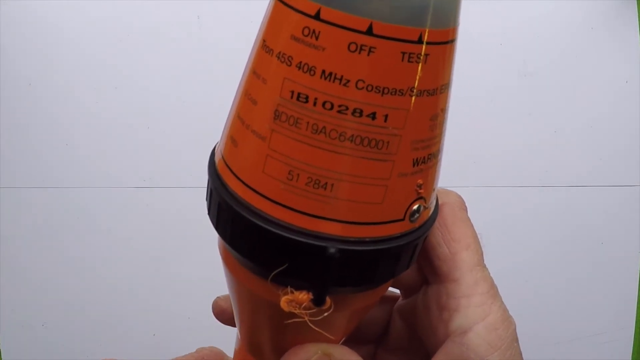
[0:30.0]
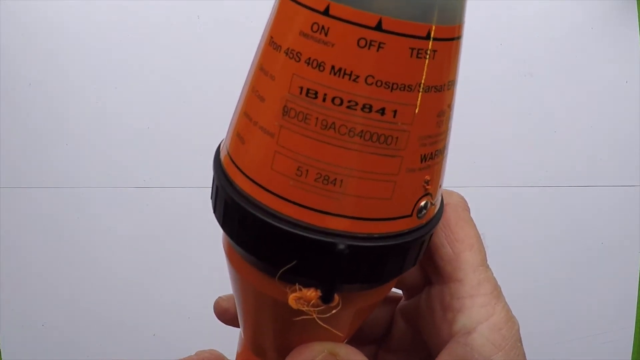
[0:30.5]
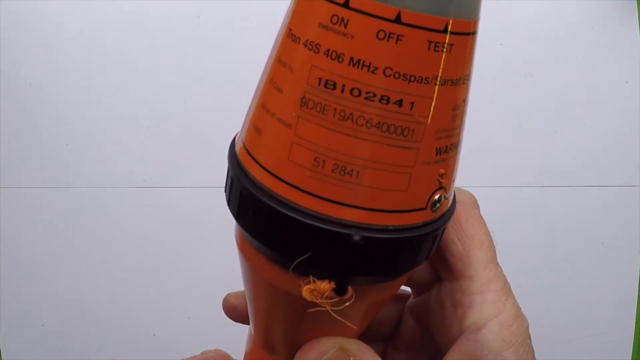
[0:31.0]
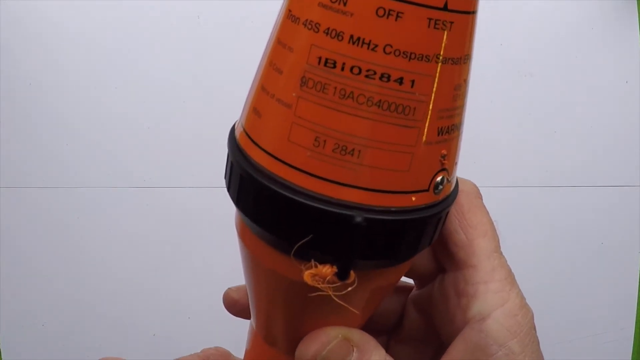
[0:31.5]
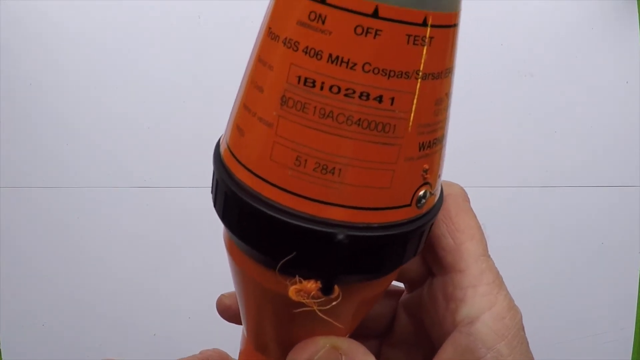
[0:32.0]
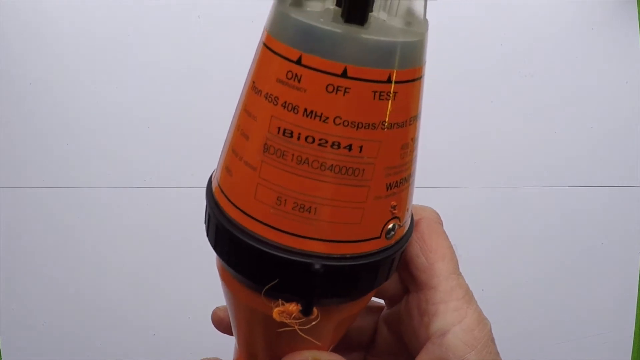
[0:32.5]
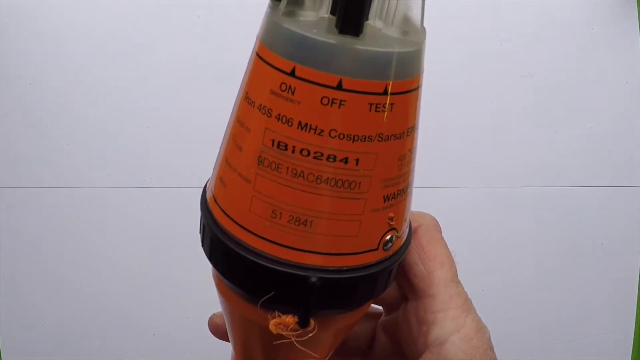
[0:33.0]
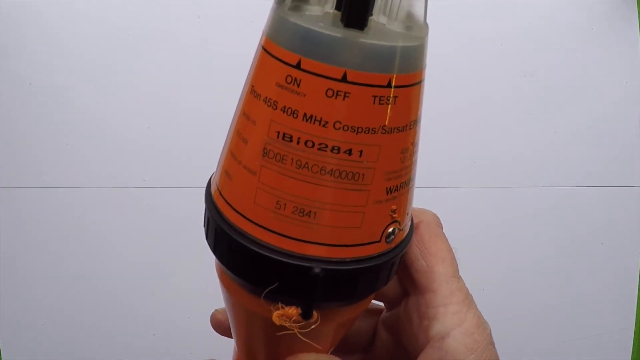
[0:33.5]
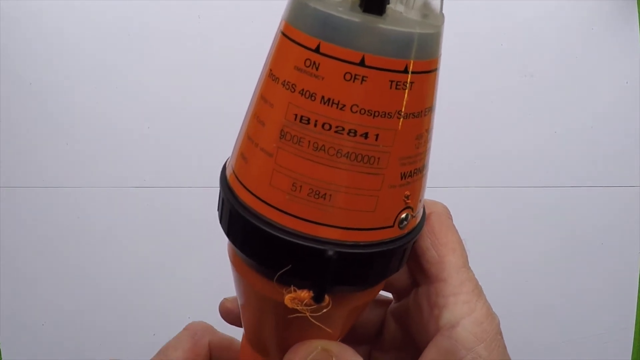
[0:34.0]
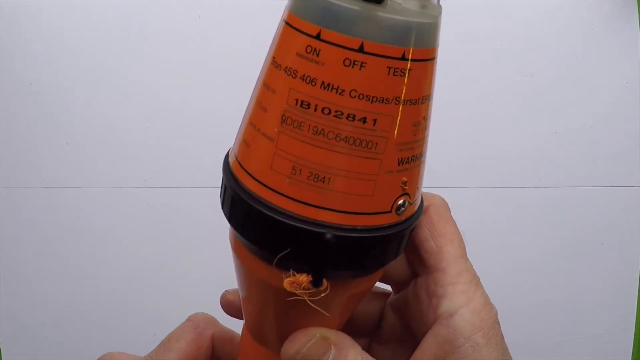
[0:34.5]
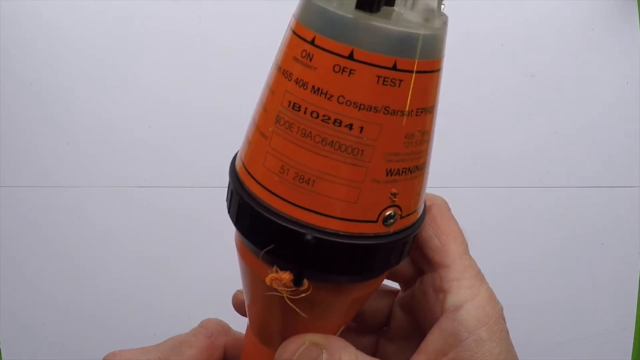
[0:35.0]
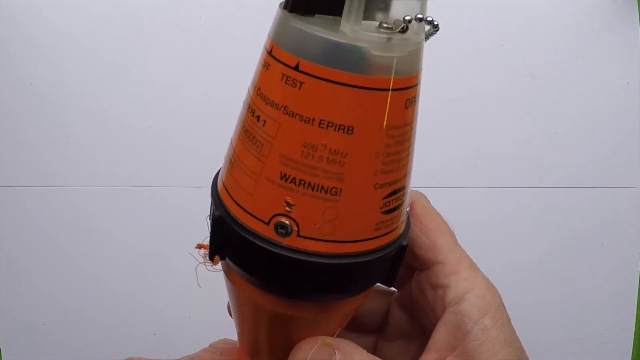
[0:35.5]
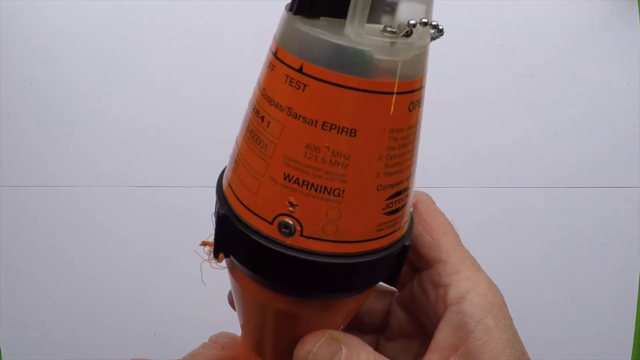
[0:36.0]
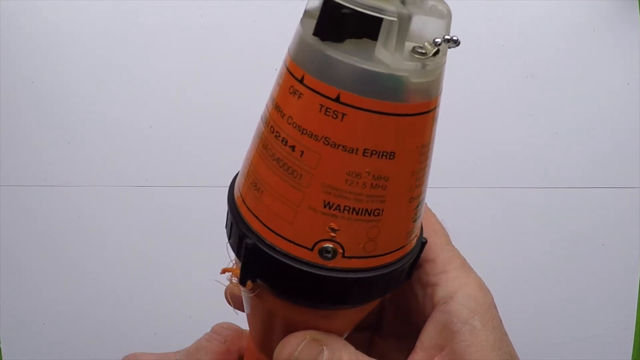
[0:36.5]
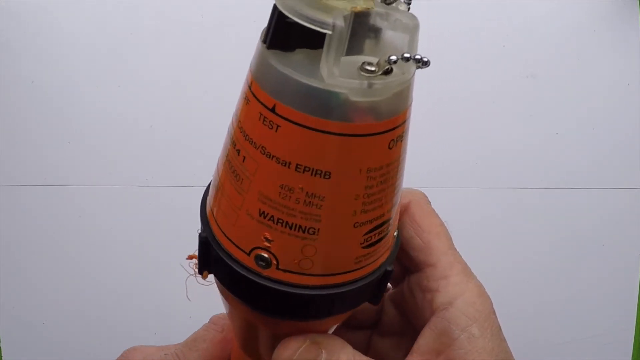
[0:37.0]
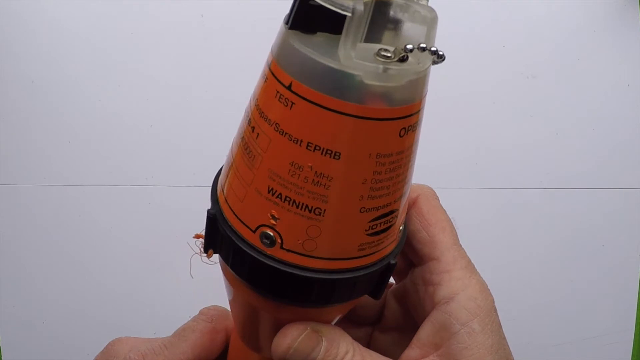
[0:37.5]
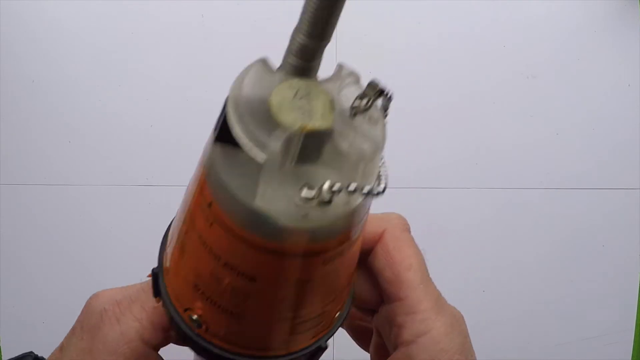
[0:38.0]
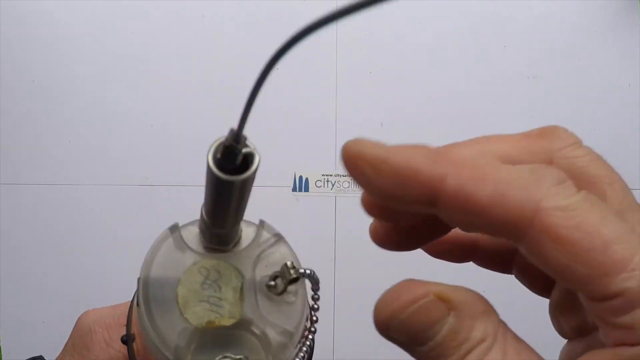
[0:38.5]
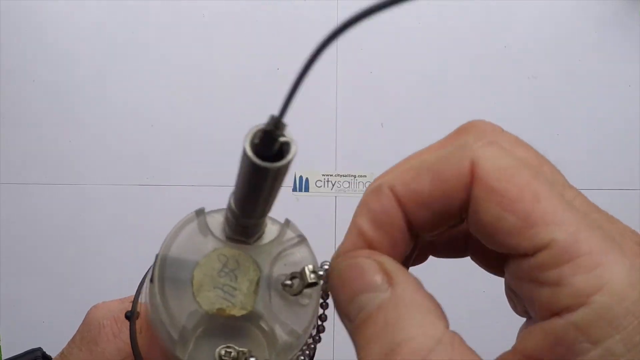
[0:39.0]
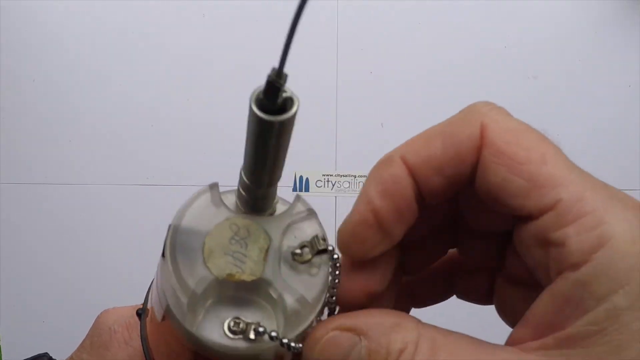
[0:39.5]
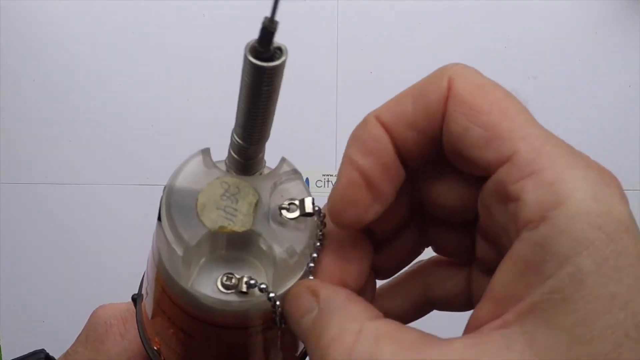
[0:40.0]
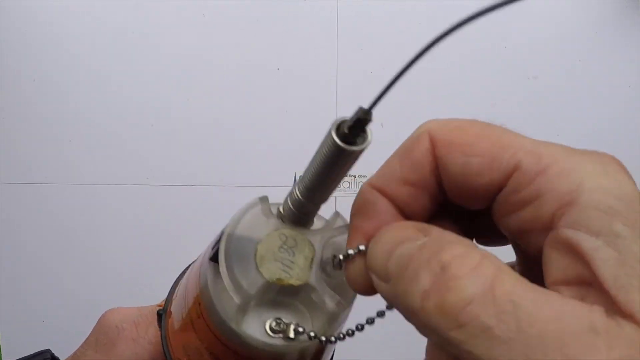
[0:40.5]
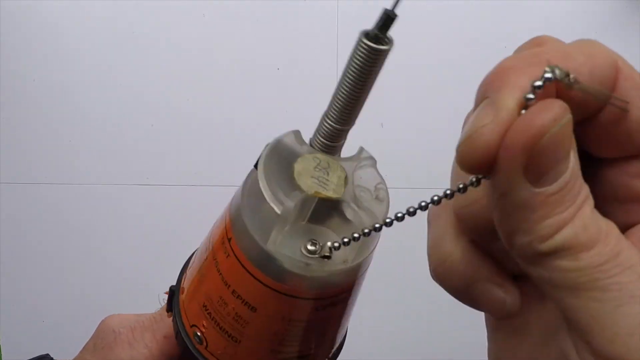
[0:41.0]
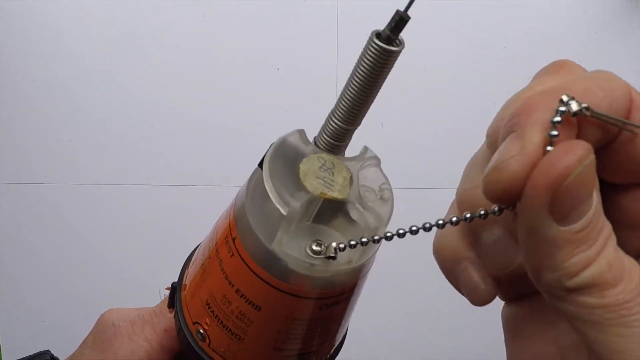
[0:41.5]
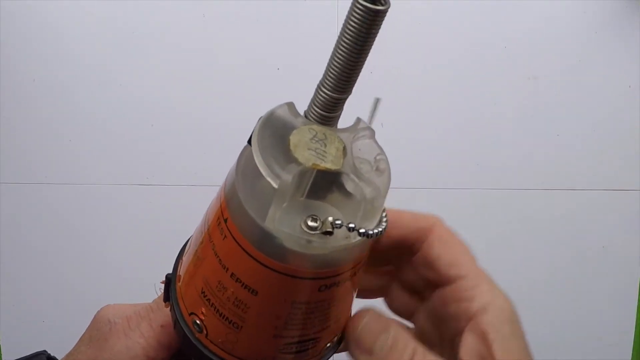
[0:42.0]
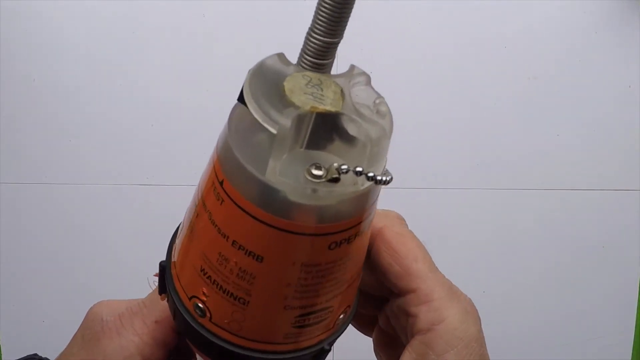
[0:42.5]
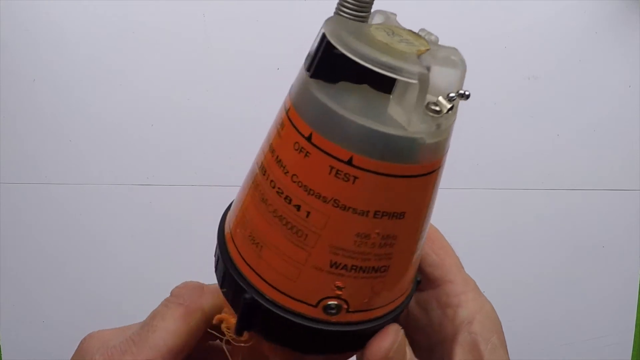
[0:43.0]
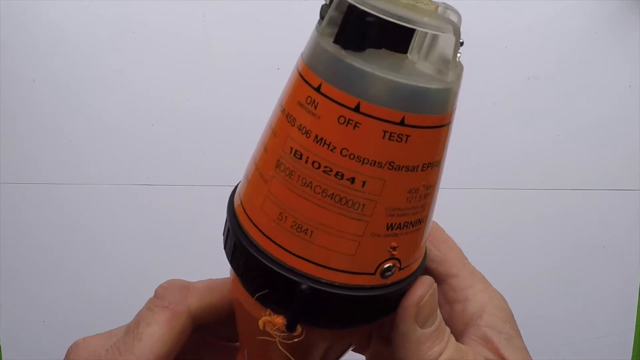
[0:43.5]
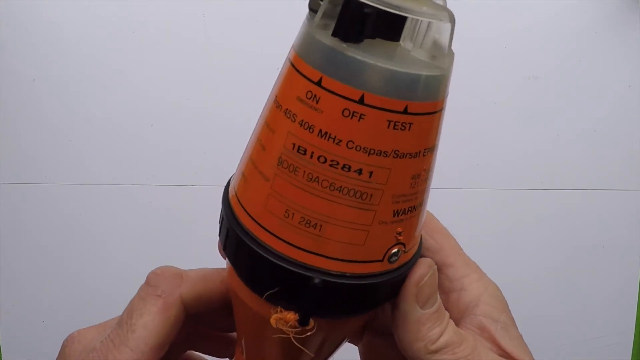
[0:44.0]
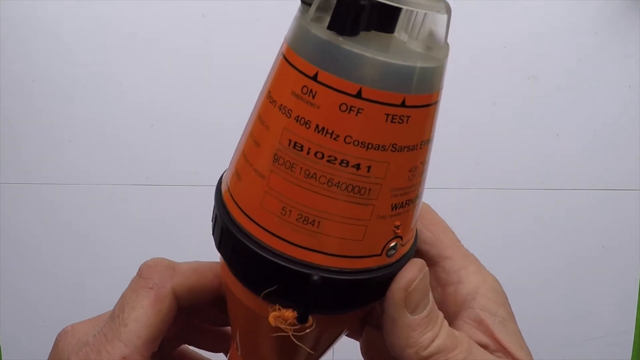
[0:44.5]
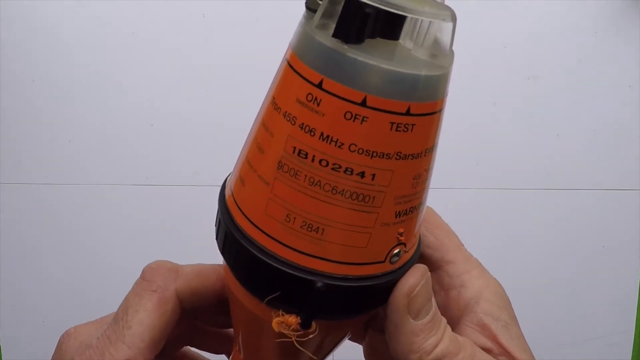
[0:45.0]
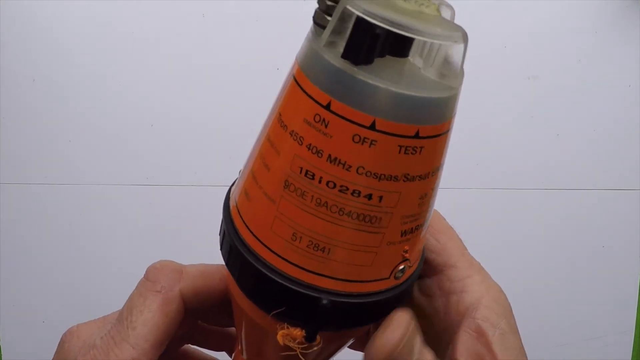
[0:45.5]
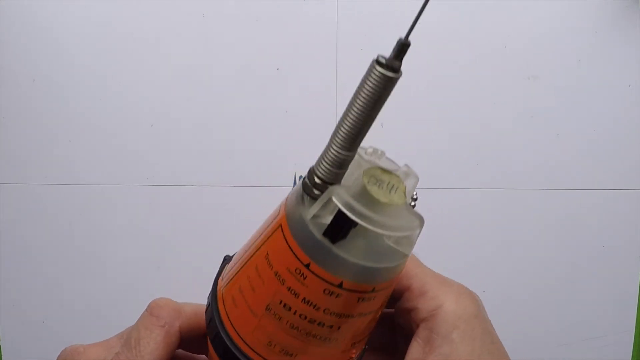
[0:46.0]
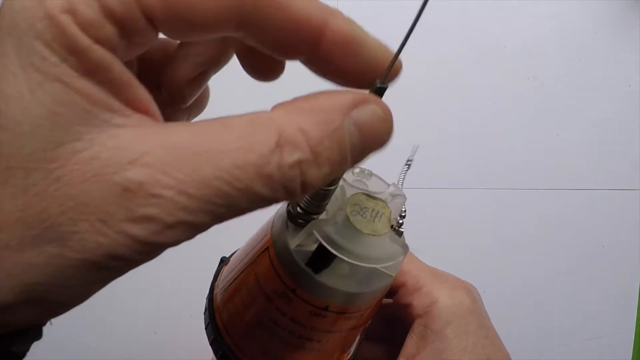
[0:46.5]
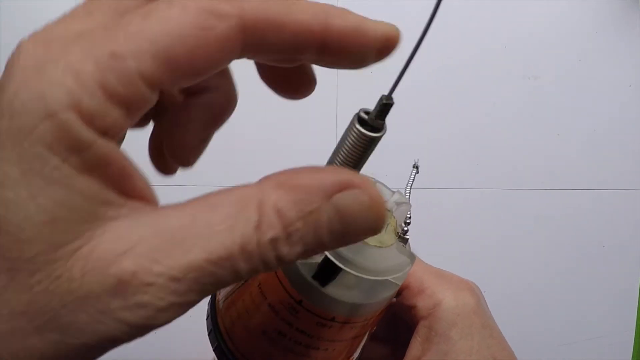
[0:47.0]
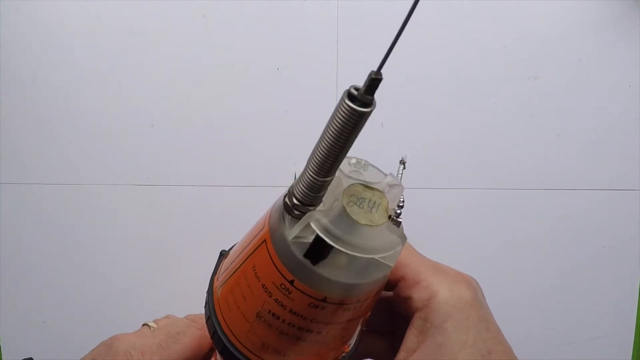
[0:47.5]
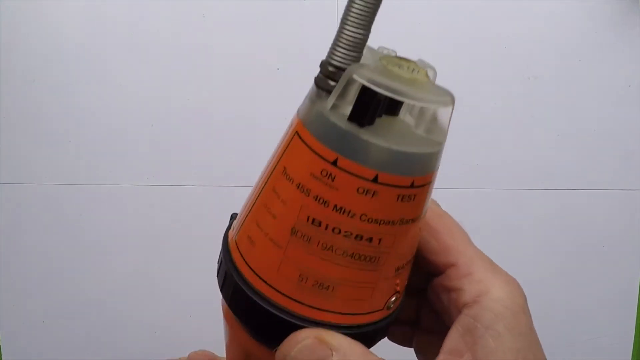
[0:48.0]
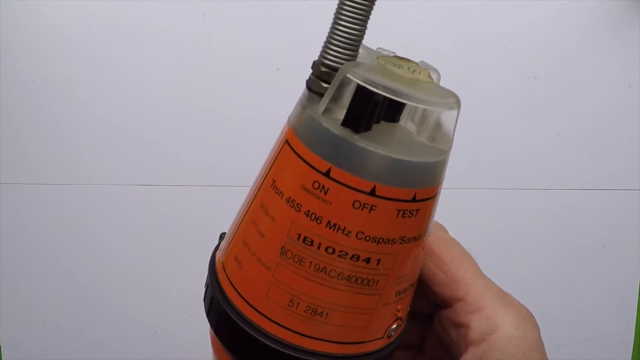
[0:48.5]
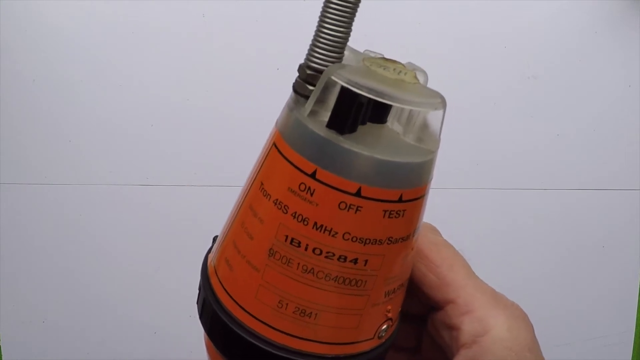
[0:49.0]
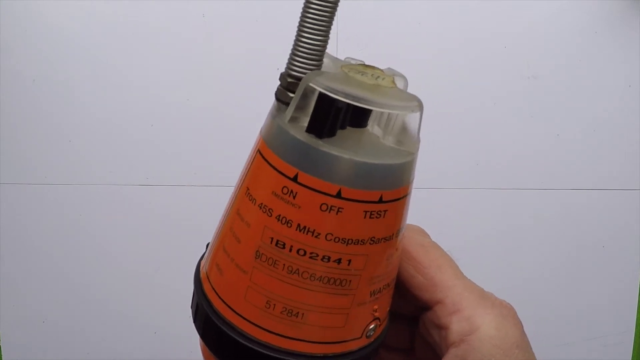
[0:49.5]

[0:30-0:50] A person holds the small orange capacitator in their hand, their fingers visible, and points to numbers on the machine below the on-off and test button. The camera pans up and down as the person spins the device, showing its different numbers and levels; it is currently in the off position. At the top there is something like a pin to activate the gauge or antenna, which is spiraled and curves up to the top of the unit. Next to the pin is a latch pin, similar to a necklace clasp, with silver beading that it clips into and holds.